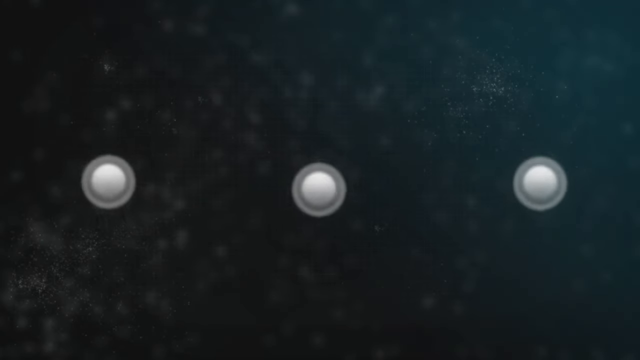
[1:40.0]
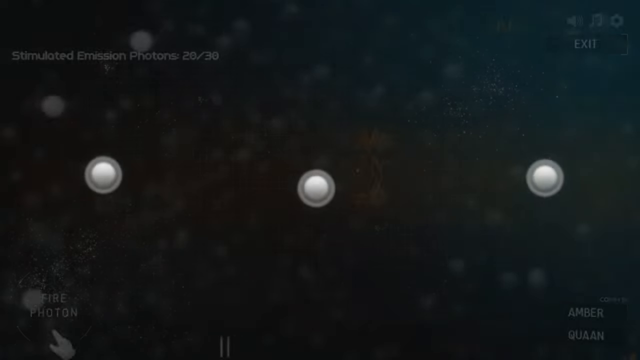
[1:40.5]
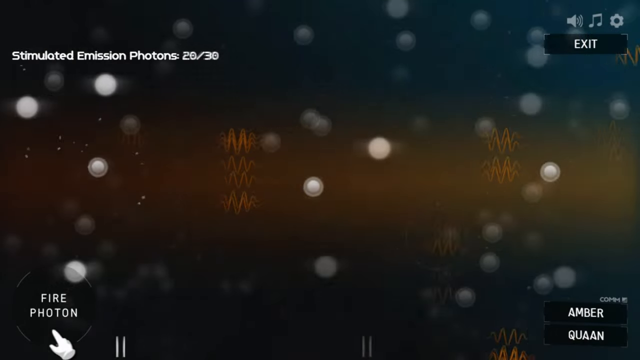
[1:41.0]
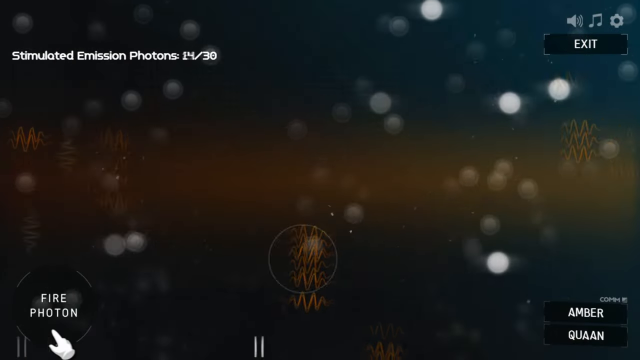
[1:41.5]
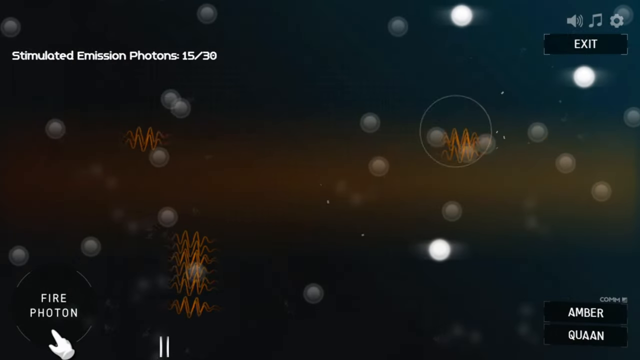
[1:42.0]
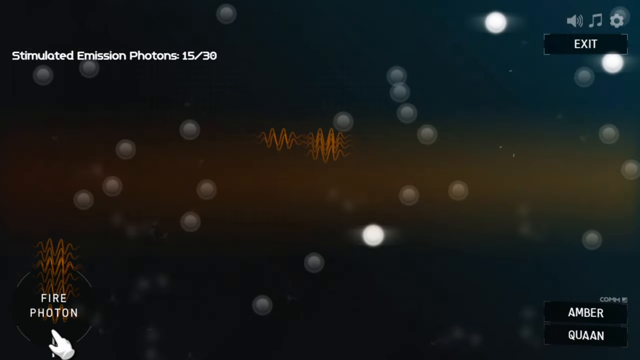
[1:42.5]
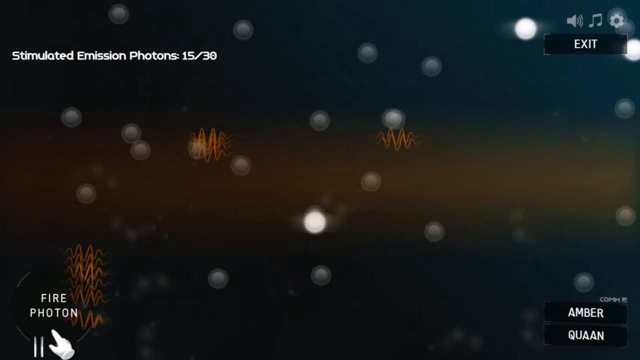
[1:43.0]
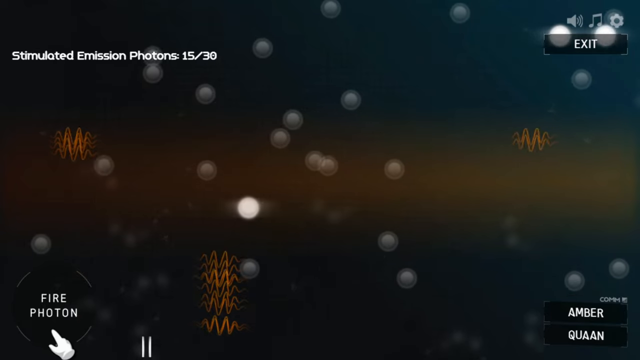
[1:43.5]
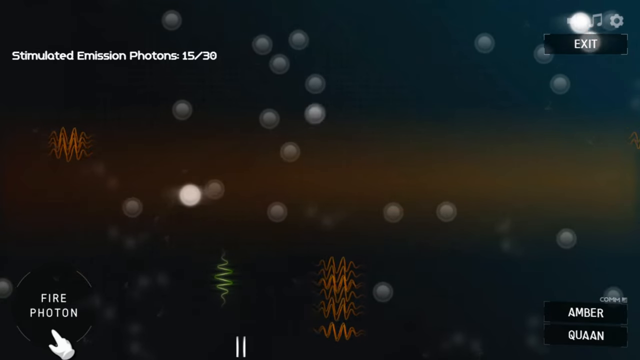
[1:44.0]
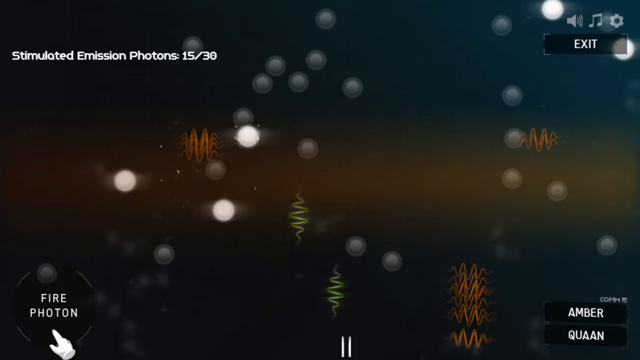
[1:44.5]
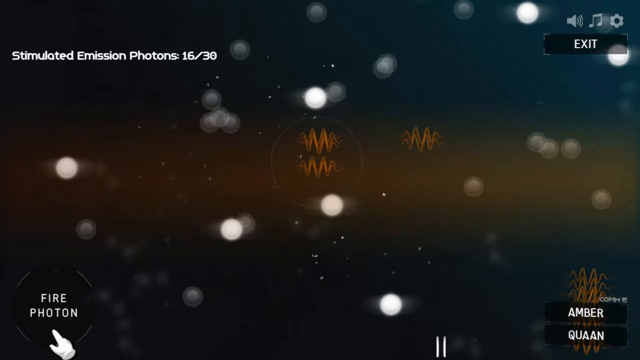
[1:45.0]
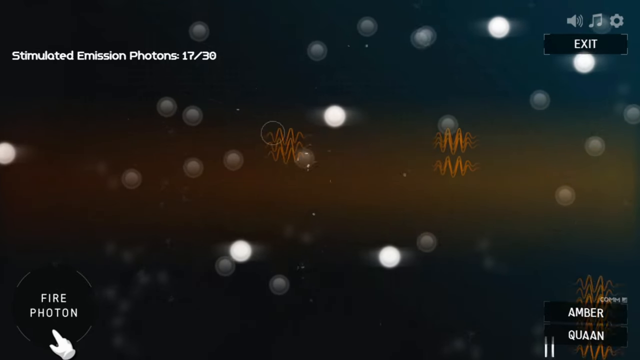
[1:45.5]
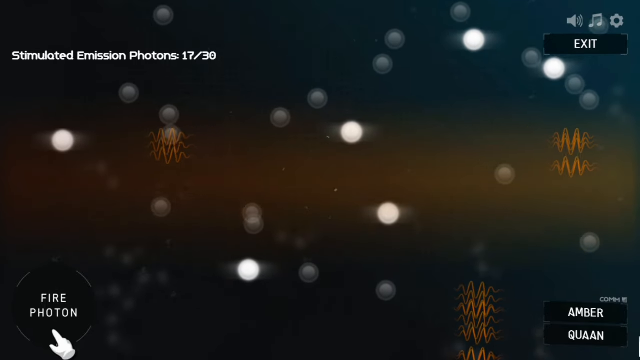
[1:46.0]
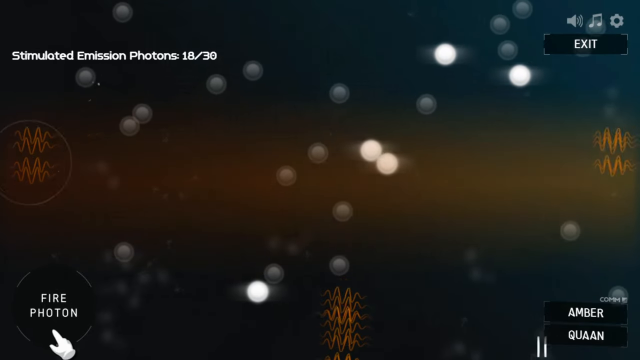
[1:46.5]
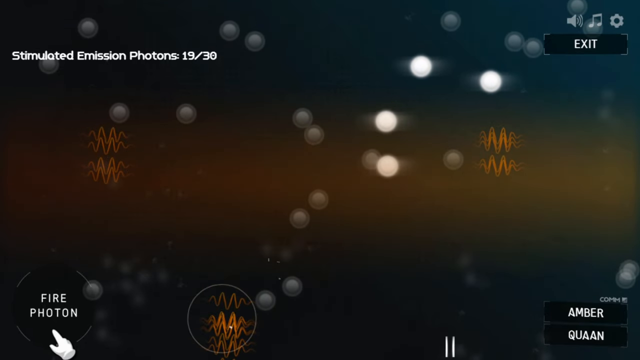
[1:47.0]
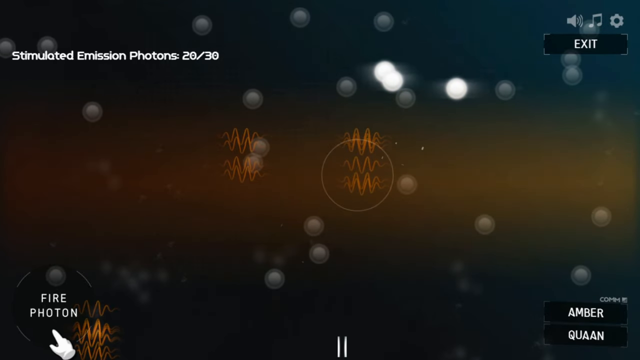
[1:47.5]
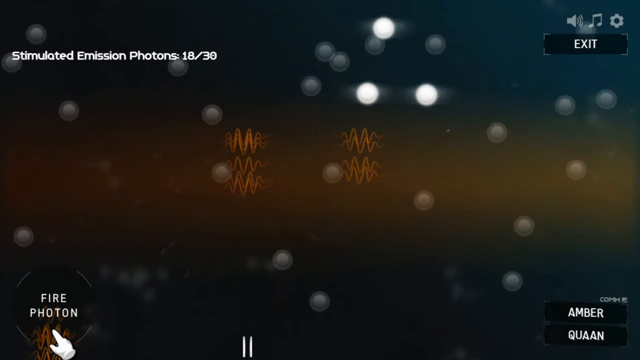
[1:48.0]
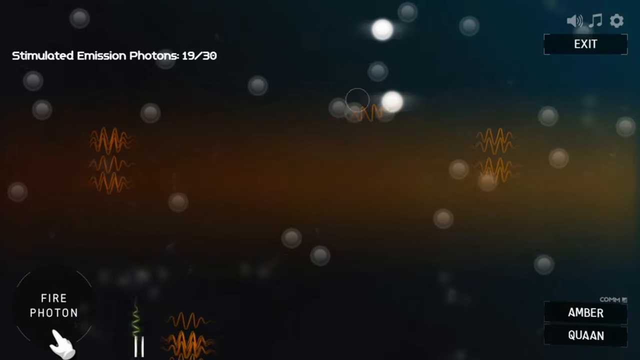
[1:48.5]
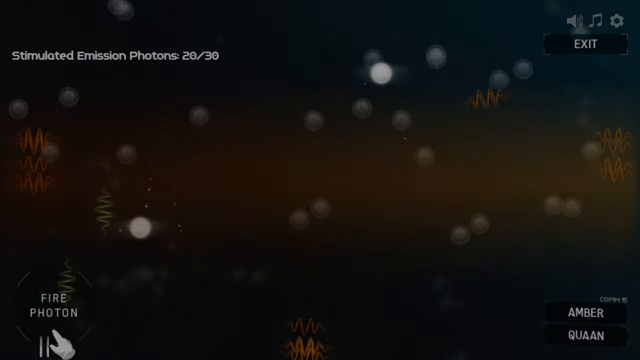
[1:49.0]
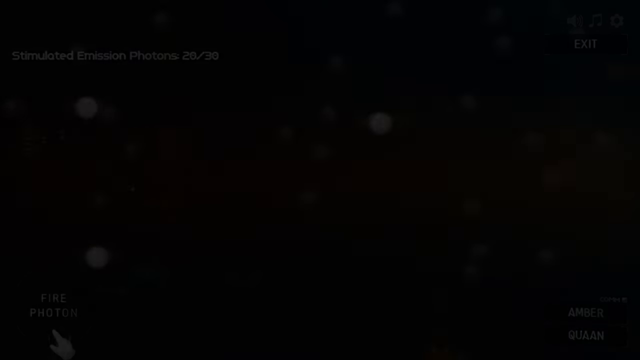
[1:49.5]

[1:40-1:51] The circles become smaller and are then joined by many other circles, which move aimlessly around the screen. On the right is a label reading "simulated emission photons" with a count out of 30. Each of the other corners has writing: the upper right-hand corner says "exit", the lower right reads "amberquon", and the lower left reads "fire photon", with a hand cursor. As the white circles continue to move randomly around the screen, orange squiggly lines move horizontally across it from left to right and from right to left, and green lines move across the screen from the bottom to the top.